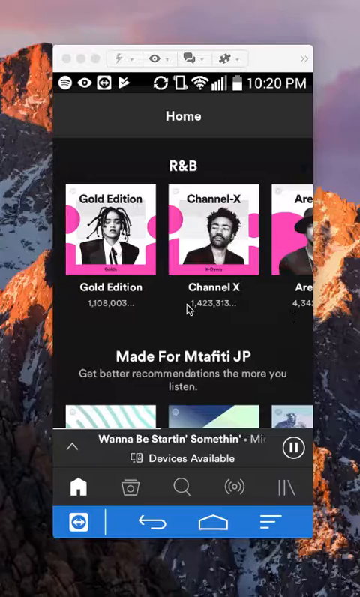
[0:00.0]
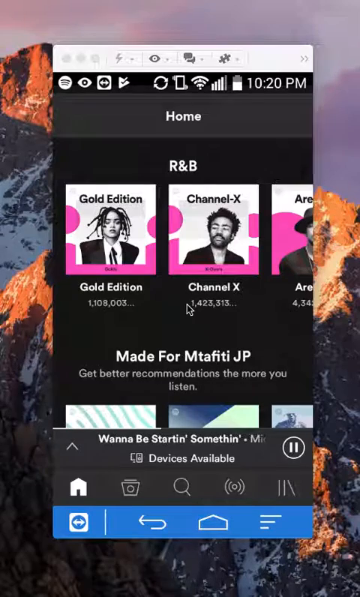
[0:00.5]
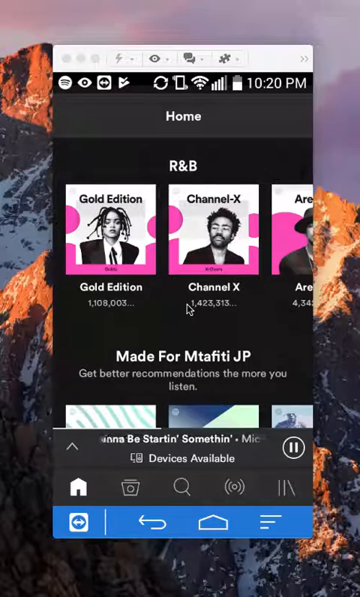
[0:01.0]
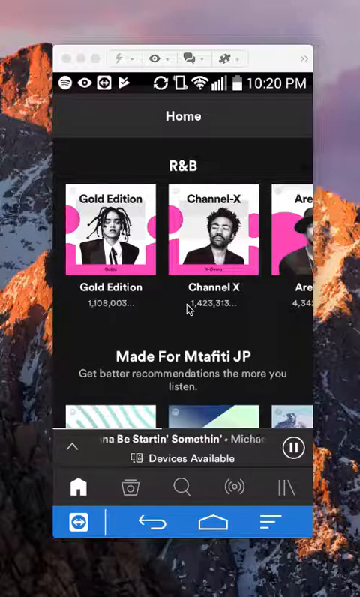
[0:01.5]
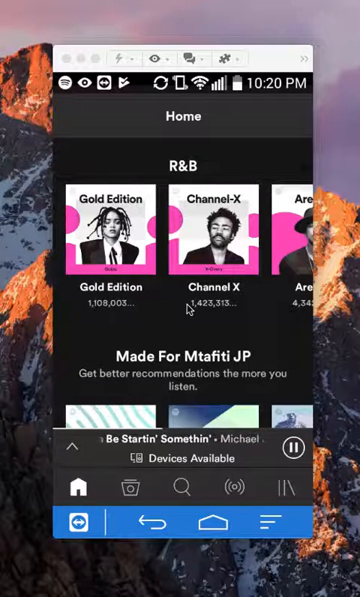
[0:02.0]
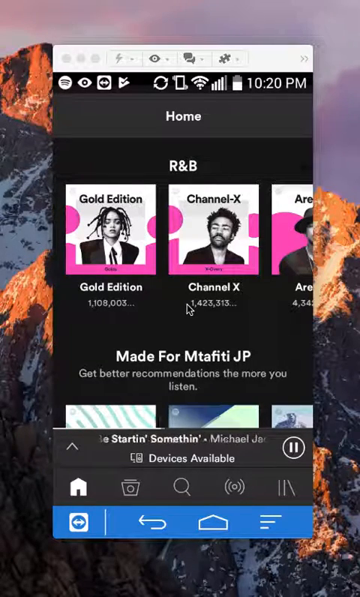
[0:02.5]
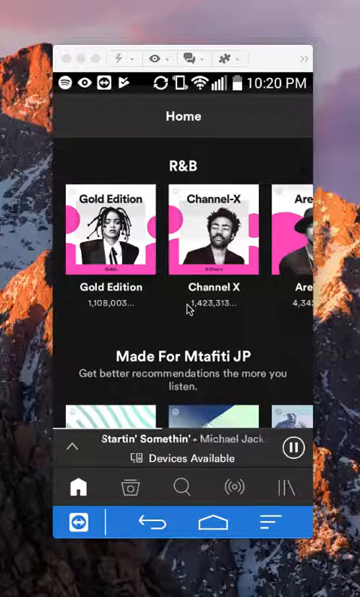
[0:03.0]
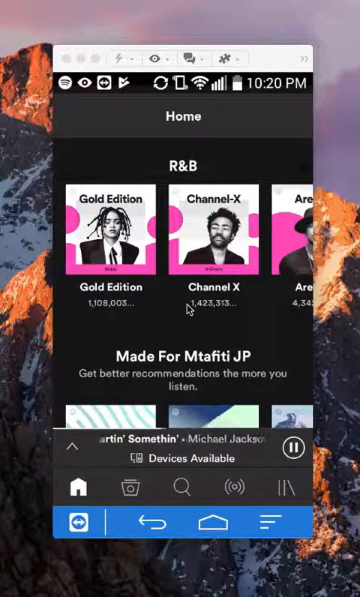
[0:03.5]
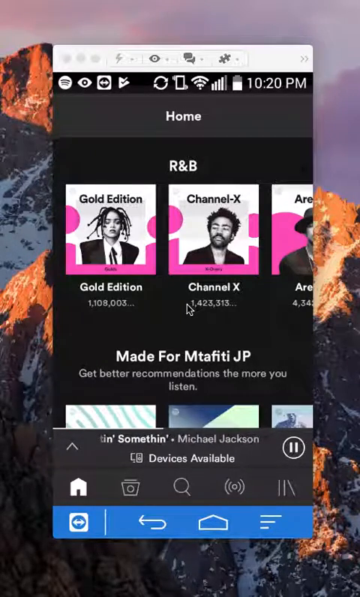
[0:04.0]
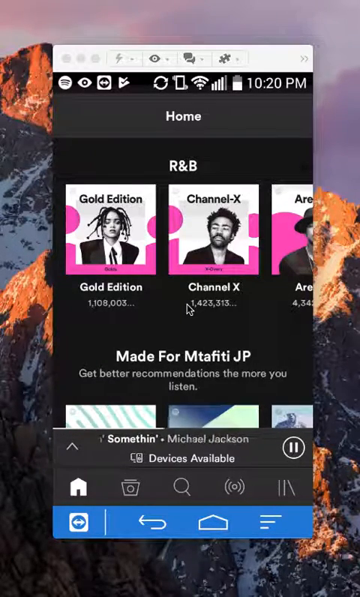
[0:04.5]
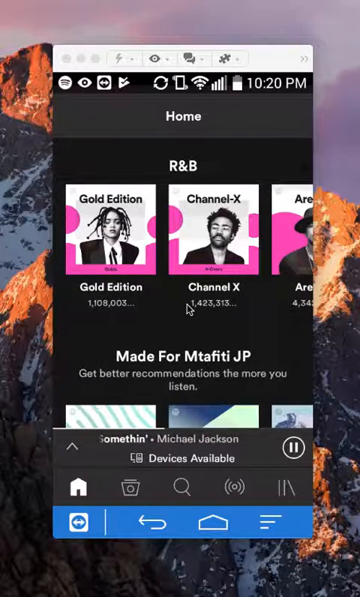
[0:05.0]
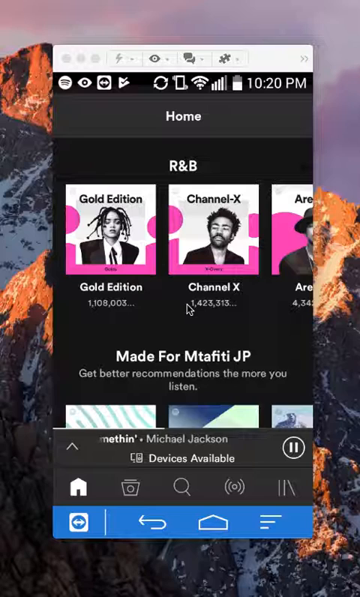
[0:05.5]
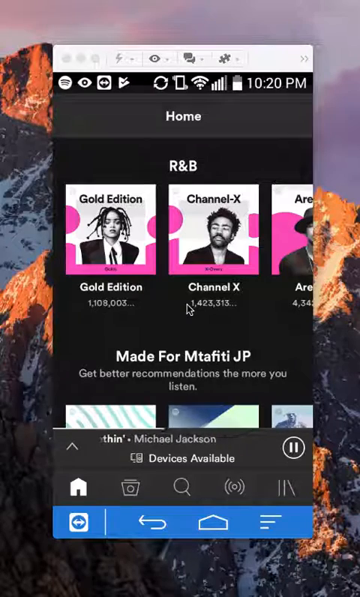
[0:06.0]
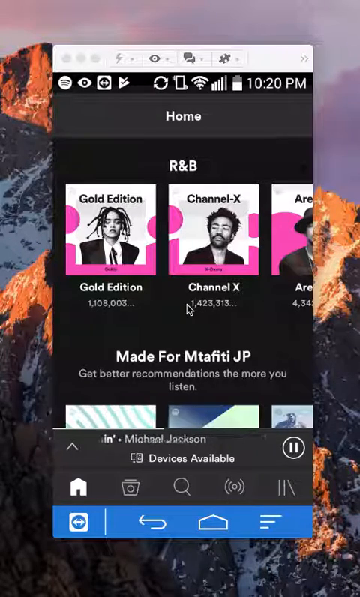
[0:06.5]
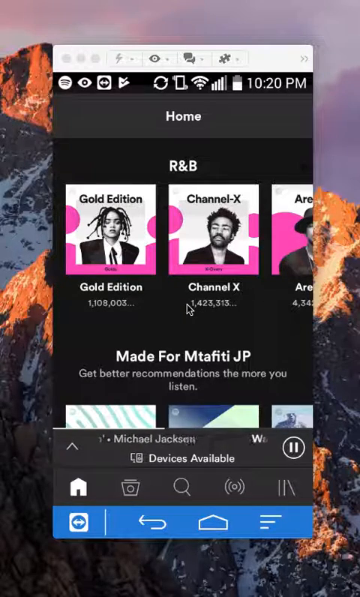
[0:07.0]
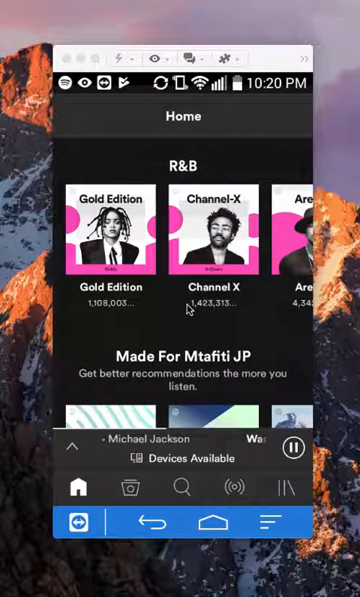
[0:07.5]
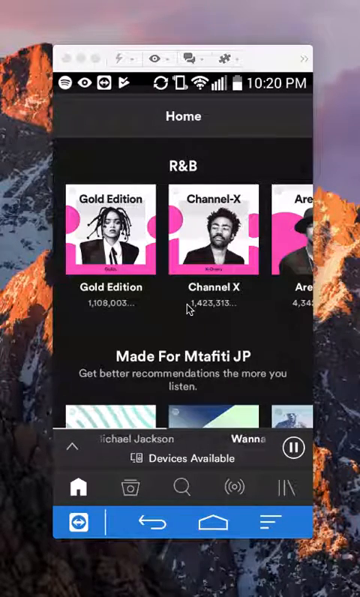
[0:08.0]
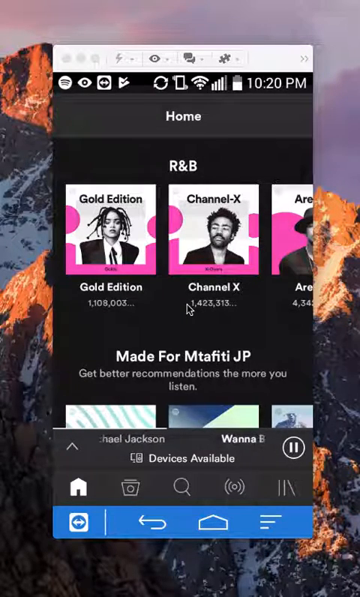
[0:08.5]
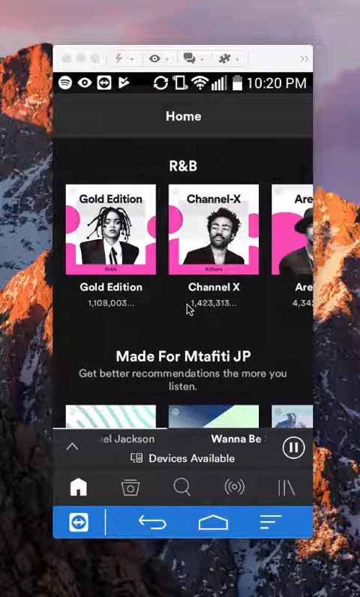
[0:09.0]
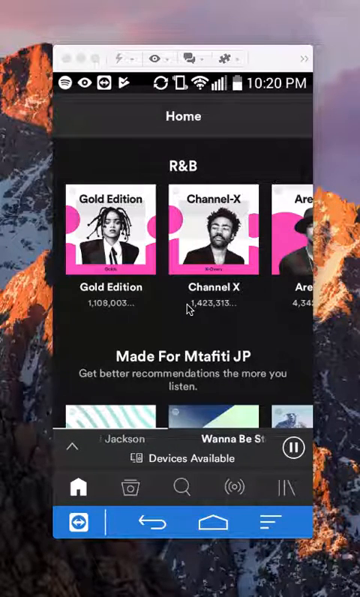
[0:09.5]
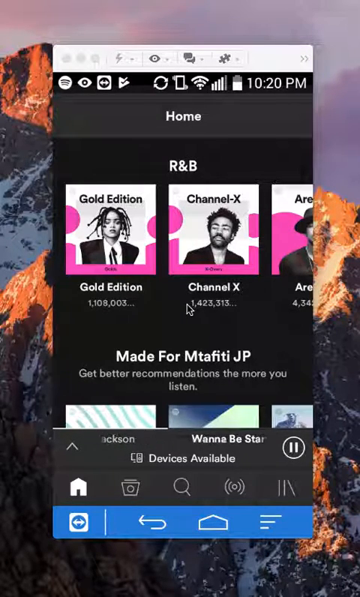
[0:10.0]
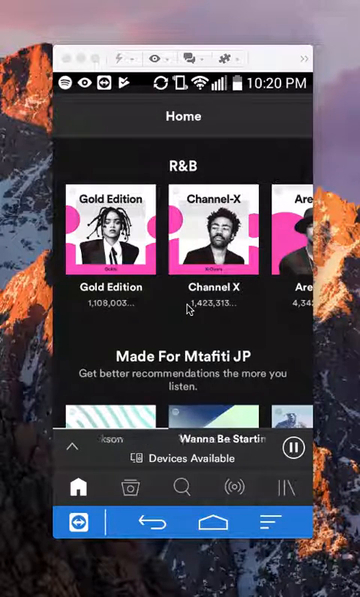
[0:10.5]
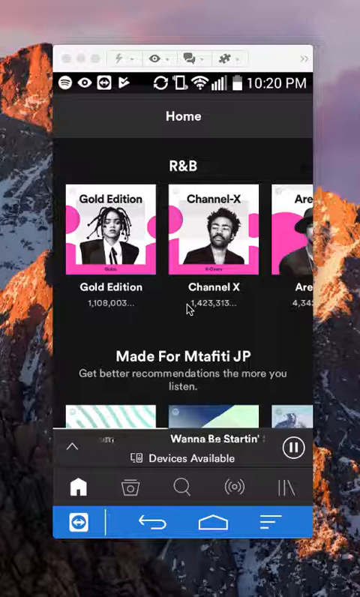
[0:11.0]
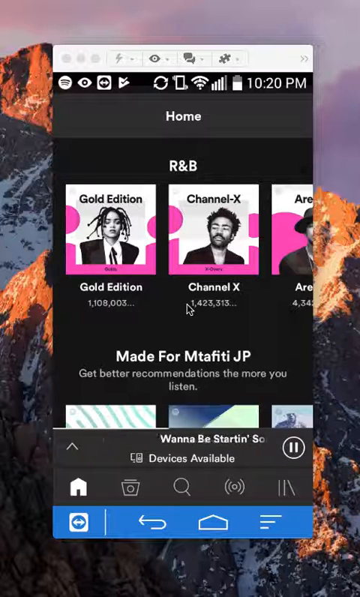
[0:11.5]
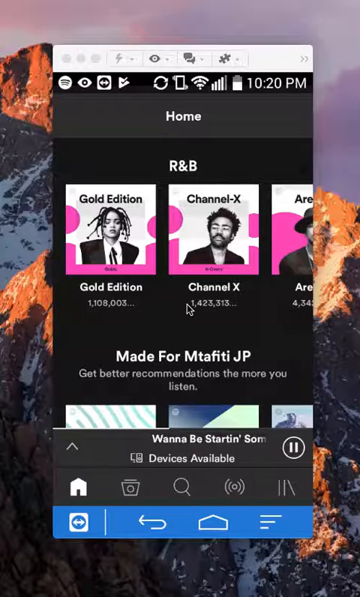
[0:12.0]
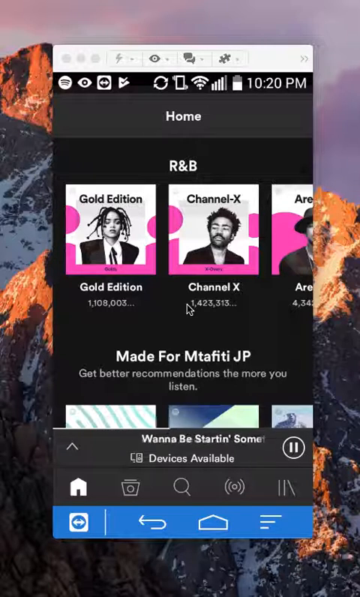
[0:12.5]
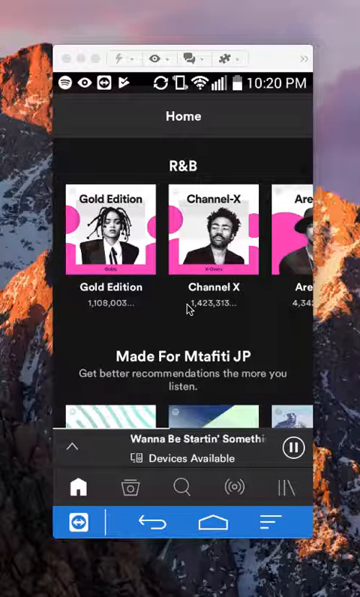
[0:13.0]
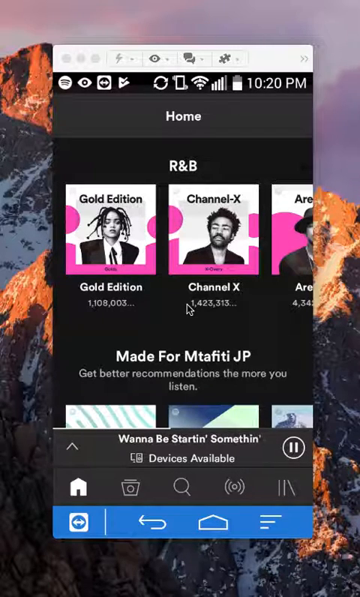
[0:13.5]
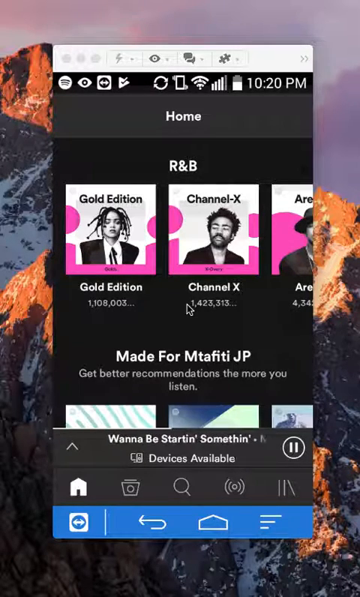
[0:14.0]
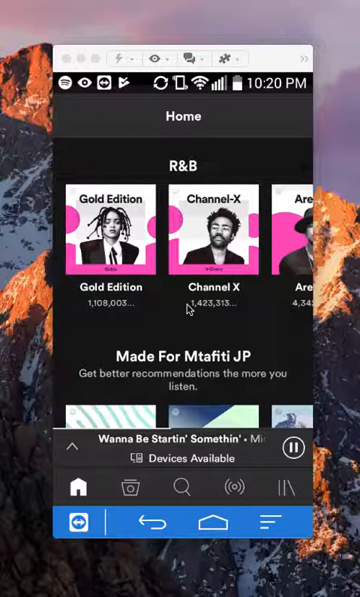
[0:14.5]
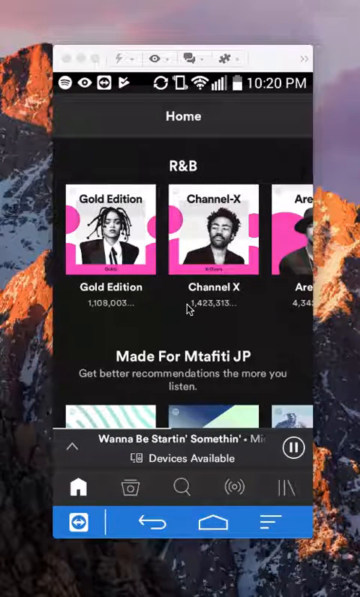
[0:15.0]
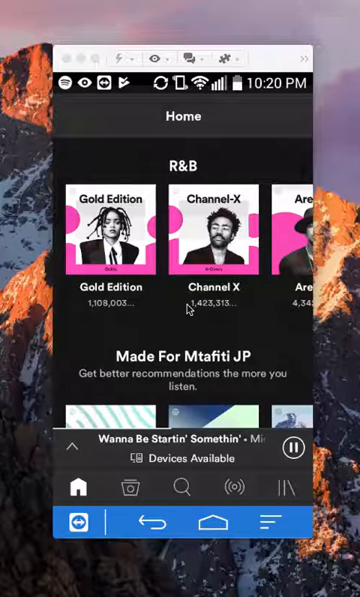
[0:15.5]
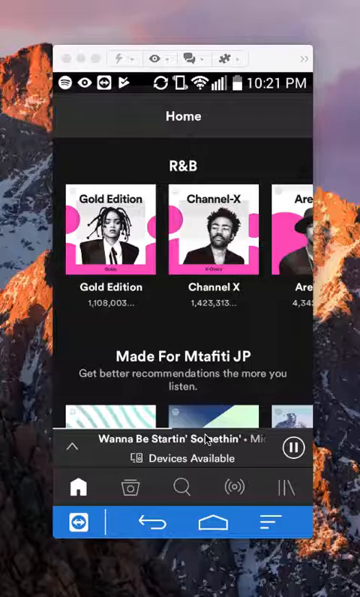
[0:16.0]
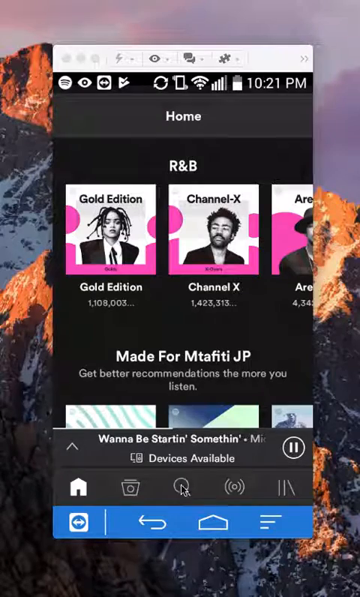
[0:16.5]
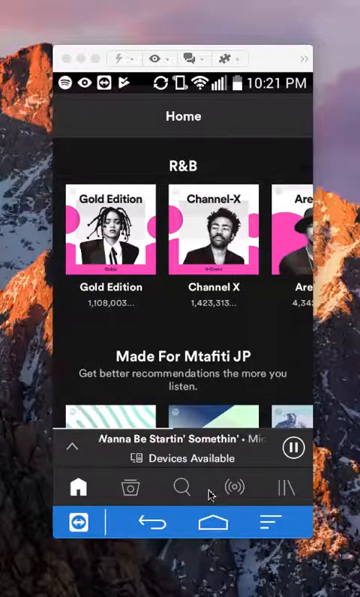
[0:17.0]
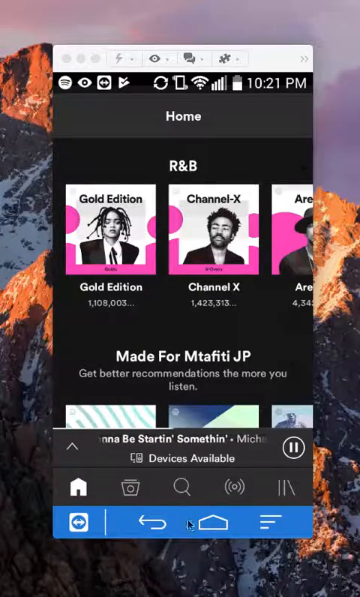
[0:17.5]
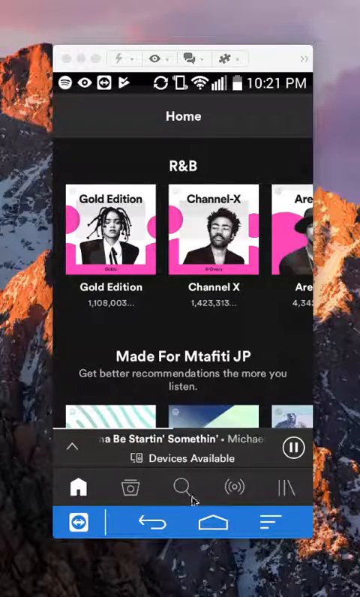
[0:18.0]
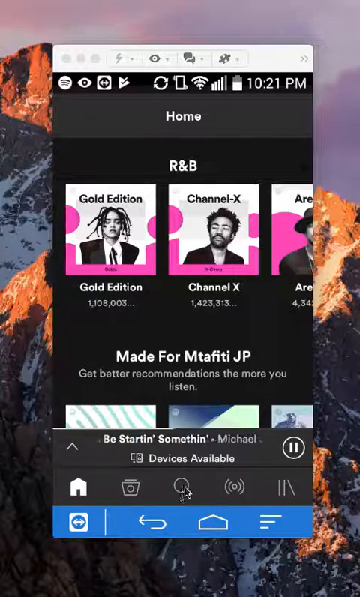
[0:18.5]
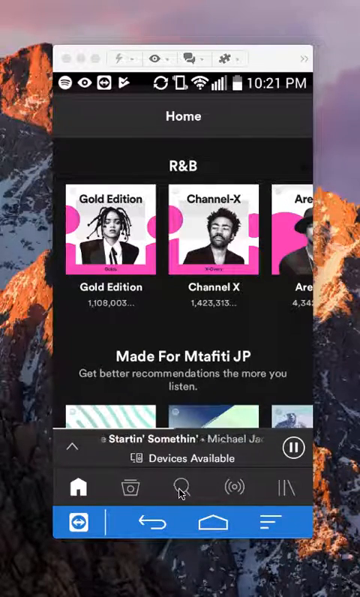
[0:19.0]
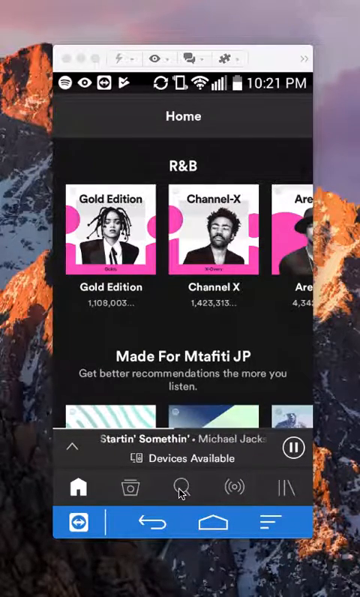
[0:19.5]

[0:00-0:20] A screen recording of a mobile application or browser is overlaid on a background display showing a close-up view of a mountainside with sharp, jagged rocks and intermittent snow dispersed across its side. The middle of the screen shows a music artist carousel, with the top section for R&B and the section below it a made-for-the-user playlist. A currently selected song is shown at the bottom of the screen, and the active artist is Michael Jackson. The top portion of the app shows a Gold Edition album with a black and white photo of a woman in her 20s wearing a black suit. The second picture is of Childish Gambino, with the title "Channel X" under his image. A mouse pointer moves within the application interface and hovers over the search button, though it does not press it.